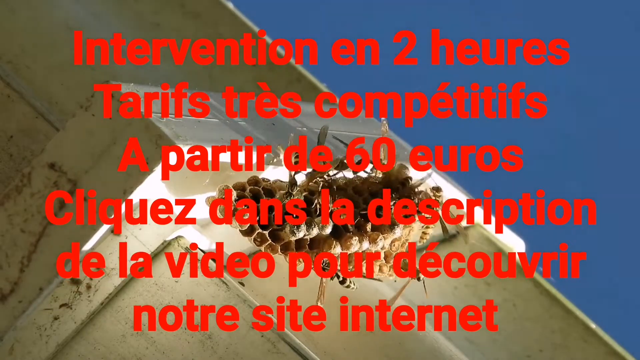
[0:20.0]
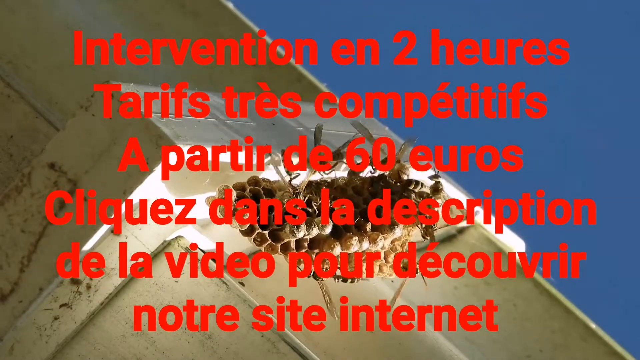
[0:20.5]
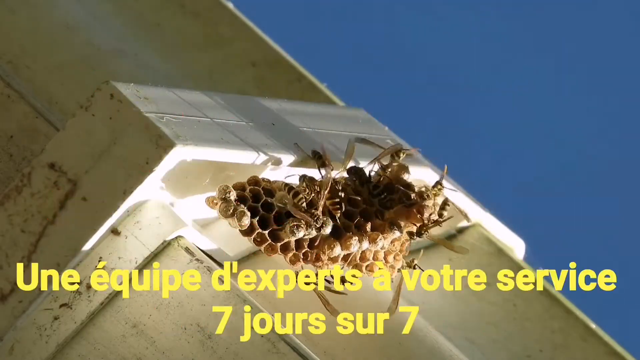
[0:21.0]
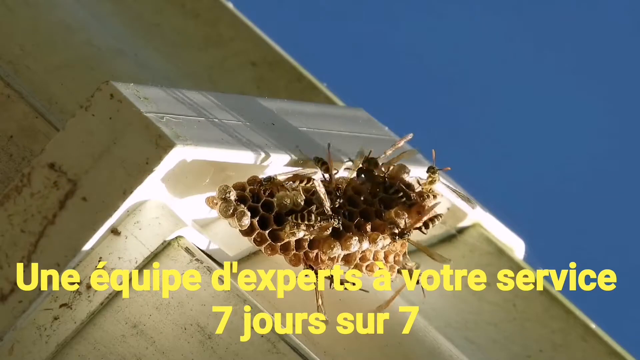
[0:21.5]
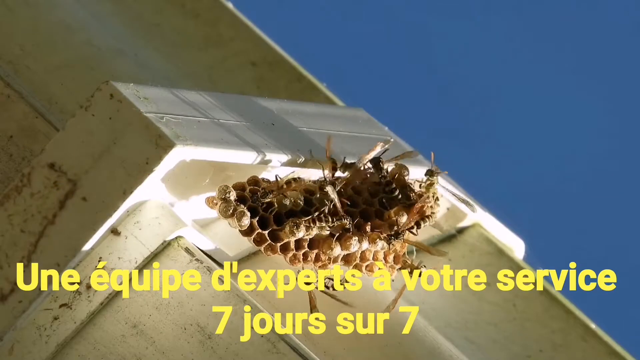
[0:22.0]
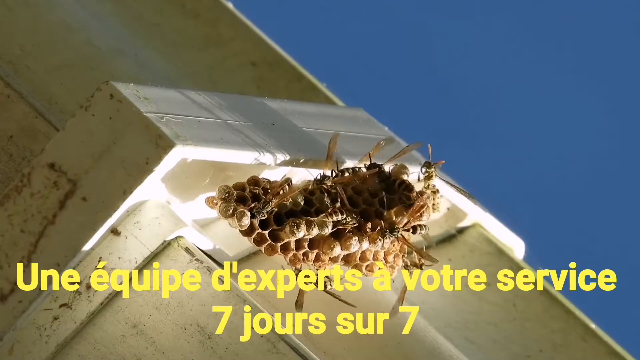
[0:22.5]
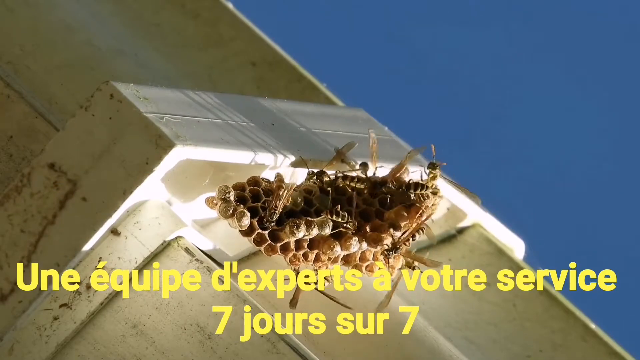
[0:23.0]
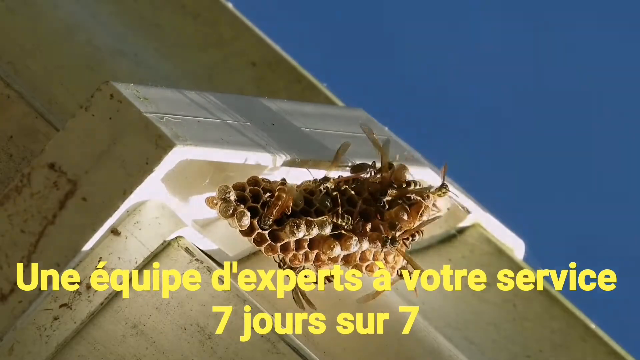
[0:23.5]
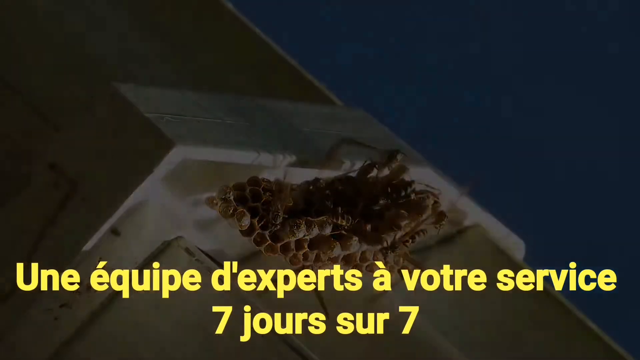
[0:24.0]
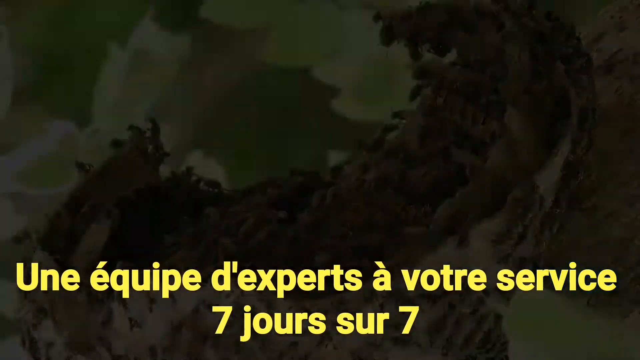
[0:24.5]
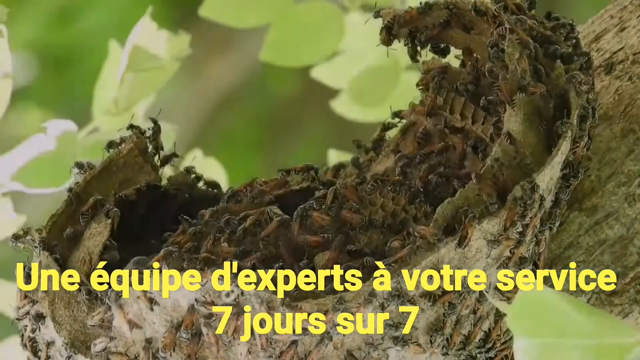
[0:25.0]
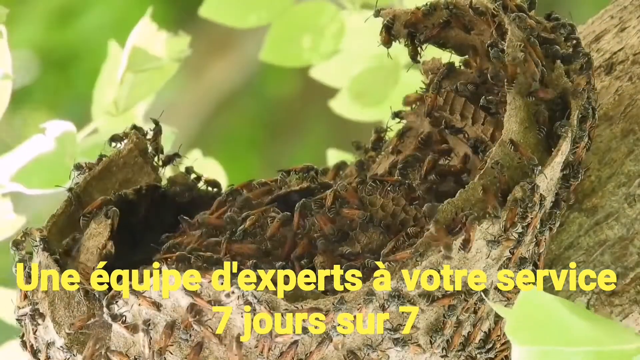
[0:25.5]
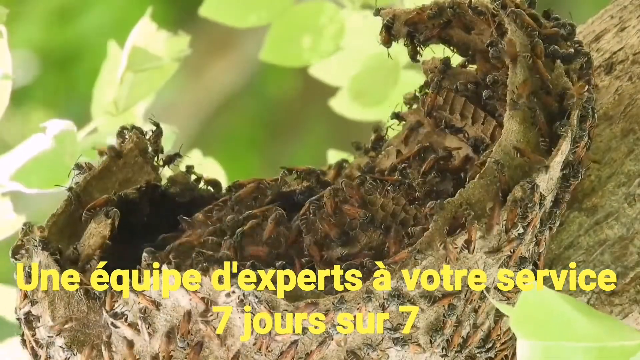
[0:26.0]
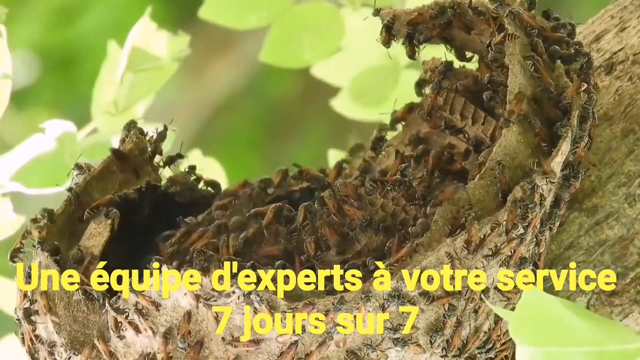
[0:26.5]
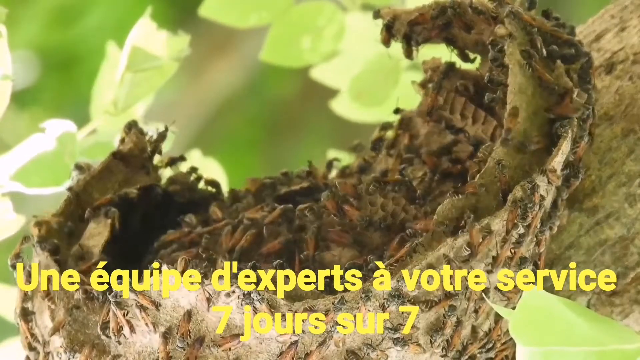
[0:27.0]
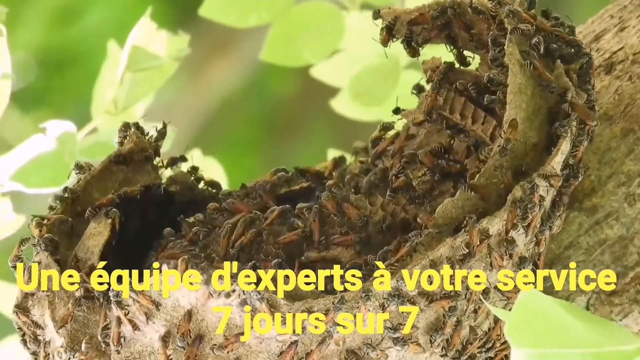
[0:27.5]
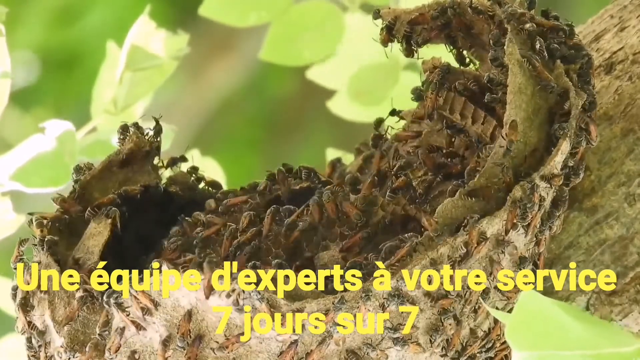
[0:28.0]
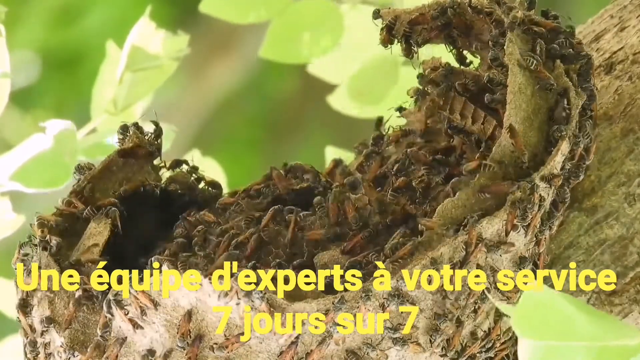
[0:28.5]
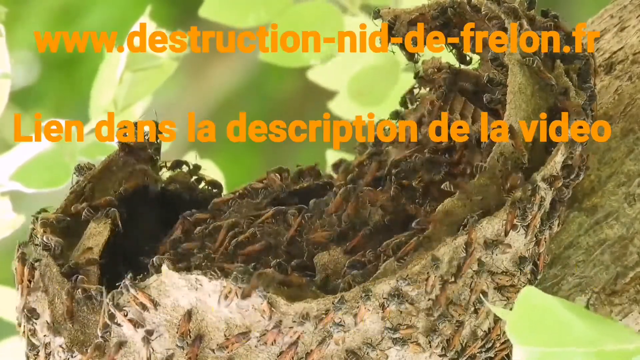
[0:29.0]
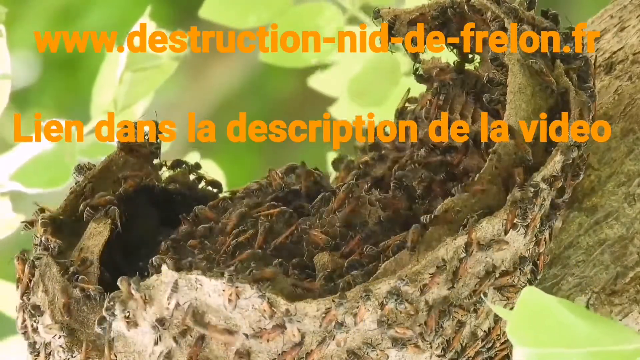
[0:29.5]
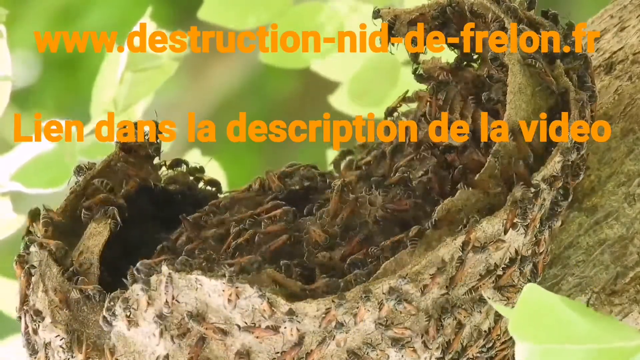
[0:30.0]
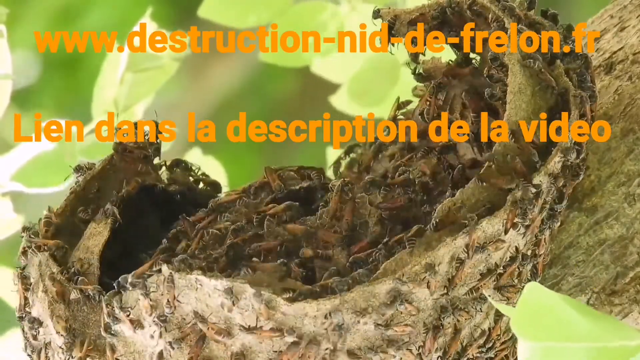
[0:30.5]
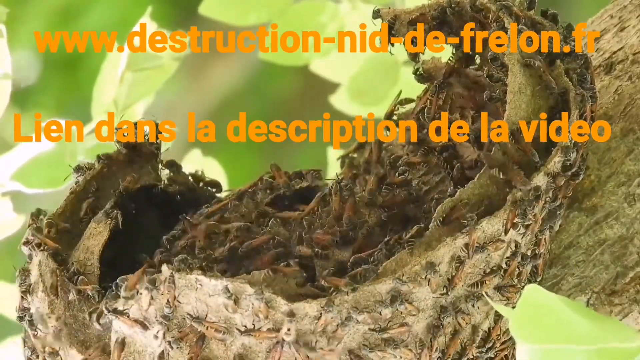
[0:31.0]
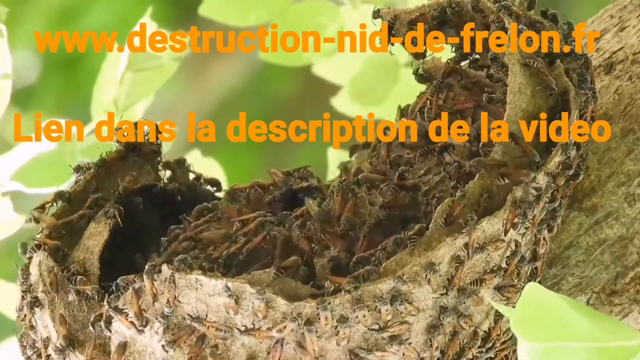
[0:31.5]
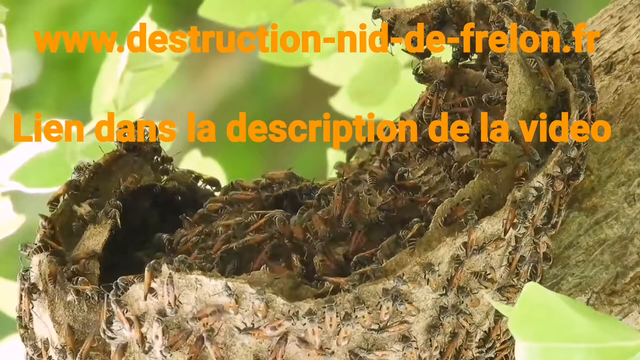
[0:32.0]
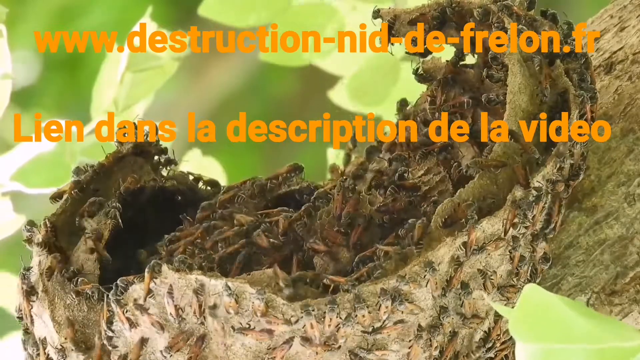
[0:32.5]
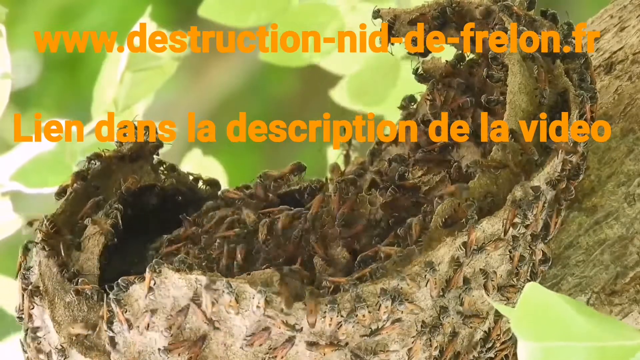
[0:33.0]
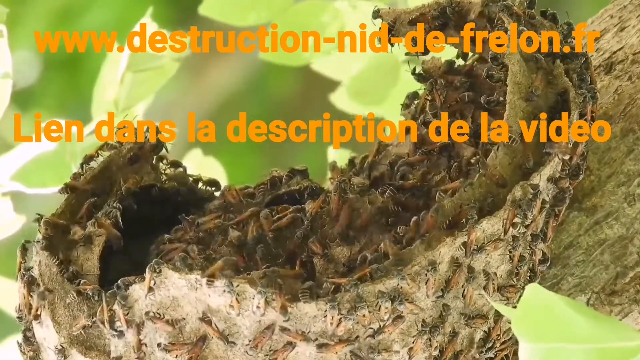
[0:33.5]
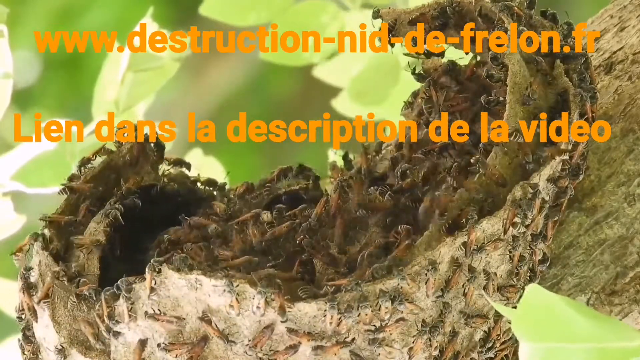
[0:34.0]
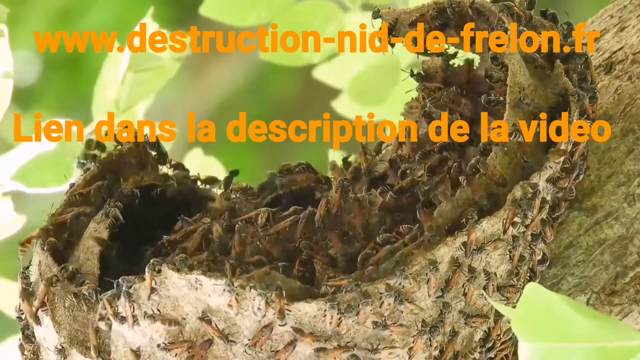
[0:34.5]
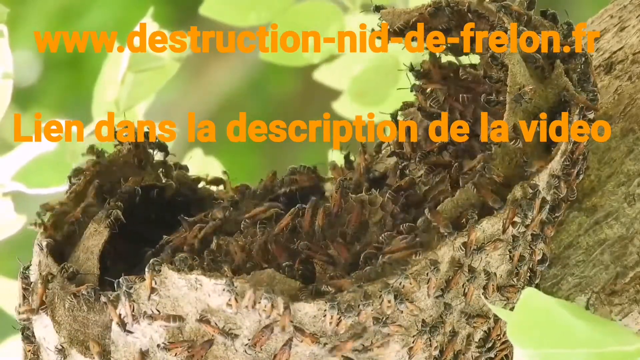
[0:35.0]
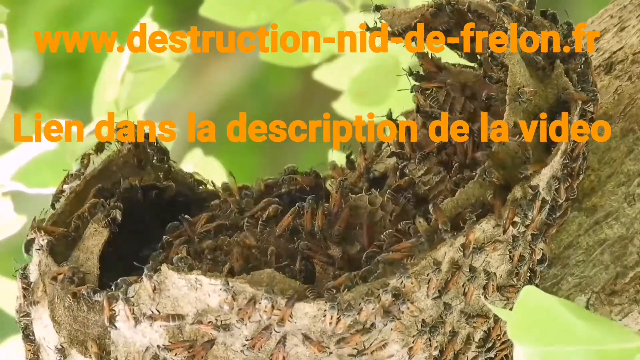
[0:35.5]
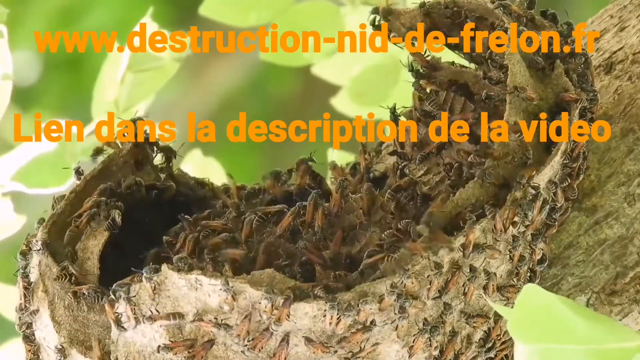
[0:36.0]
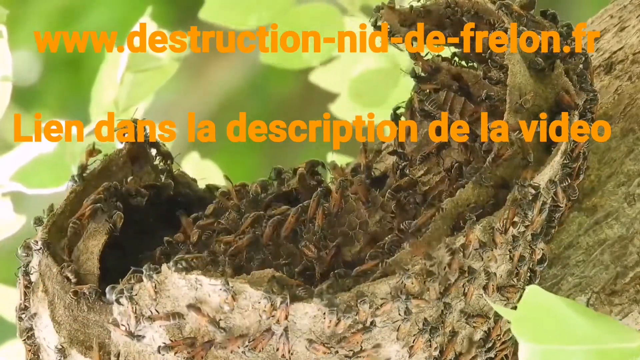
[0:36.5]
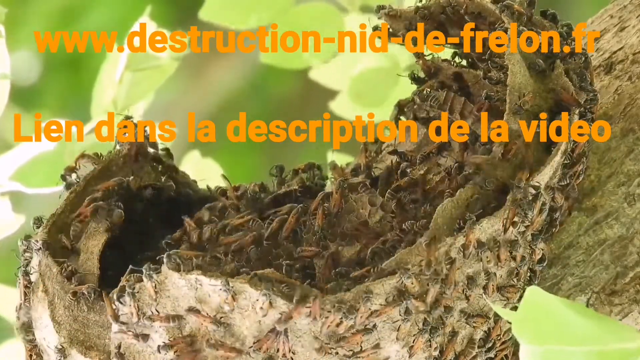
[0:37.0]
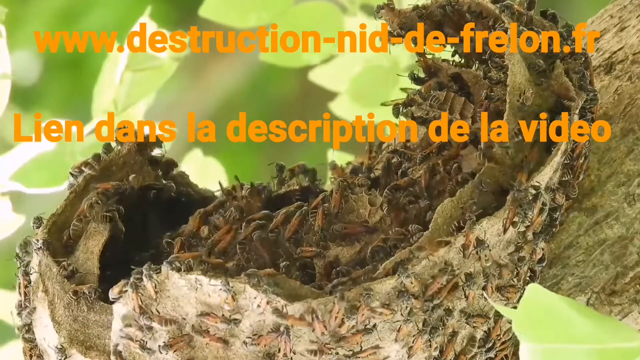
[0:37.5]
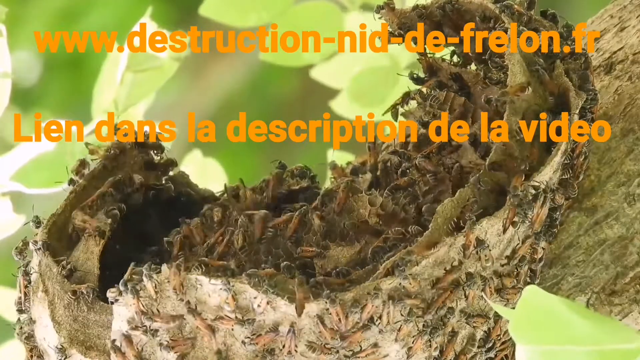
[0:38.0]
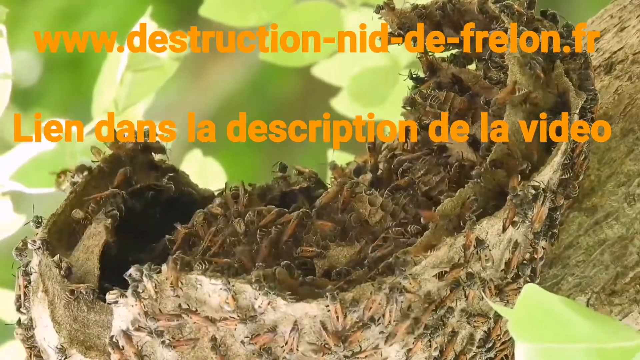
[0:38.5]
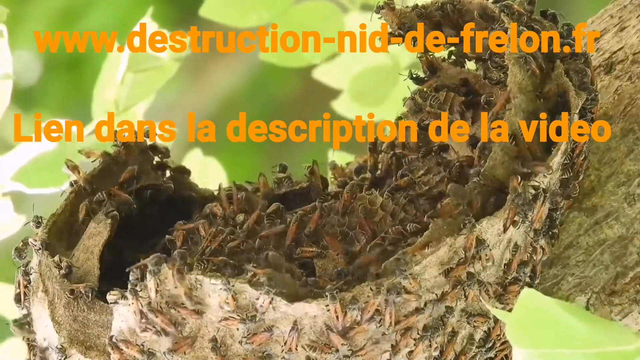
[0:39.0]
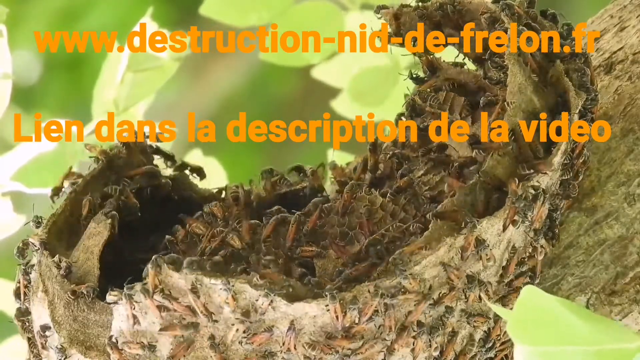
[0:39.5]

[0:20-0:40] A very close-up view shows a hornet's nest attached to the side of a house; it looks like a hive of hornets or wasps. In this animal documentary video, text in yellow in French describing what is going on is written across the screen. Next, what looks like a broken-down nest appears, with lots and lots of insects that look like young hornets. Hundreds of them crawl all over the nest. Pale green leaves are visible in the background. The nest seems to be the back of a tree lying horizontally across the ground.